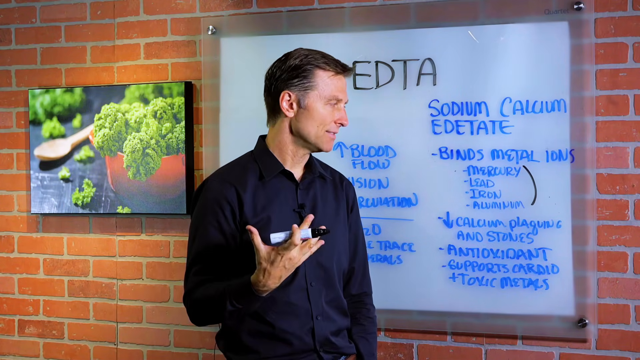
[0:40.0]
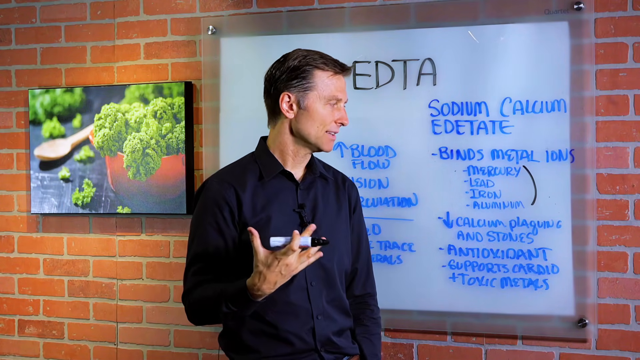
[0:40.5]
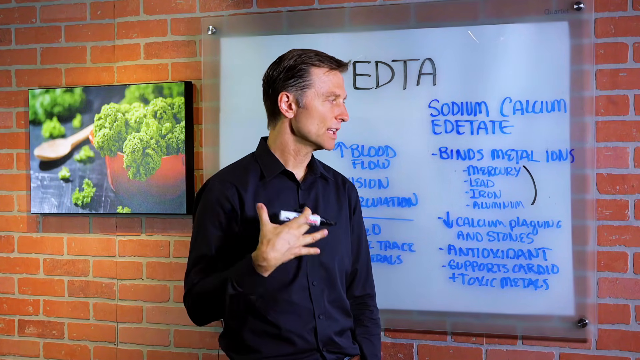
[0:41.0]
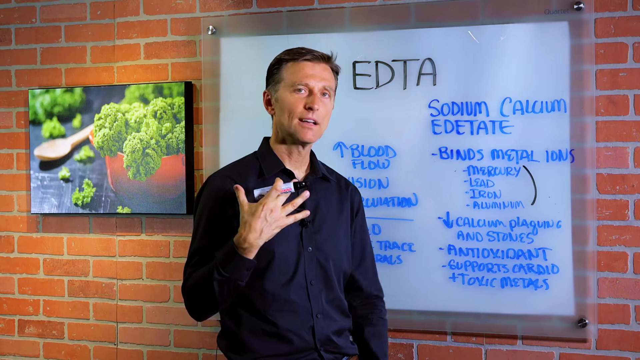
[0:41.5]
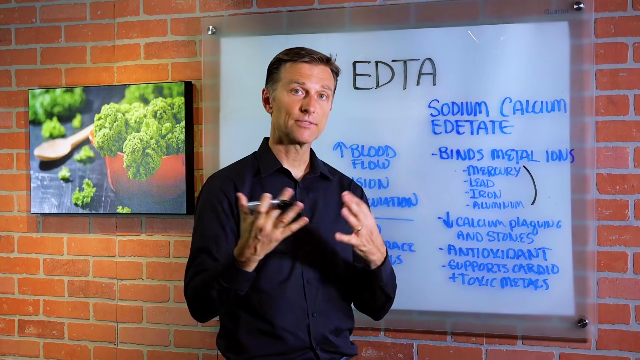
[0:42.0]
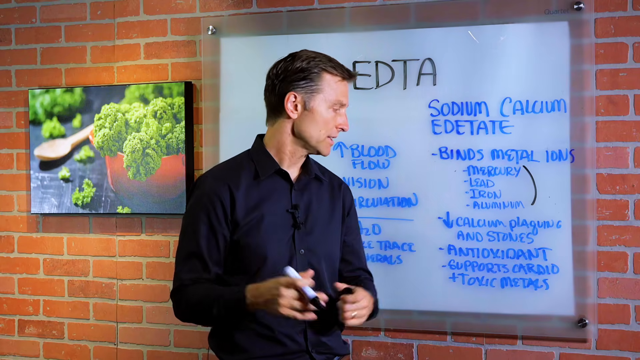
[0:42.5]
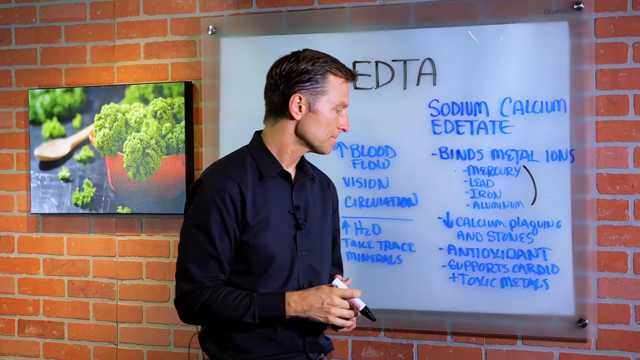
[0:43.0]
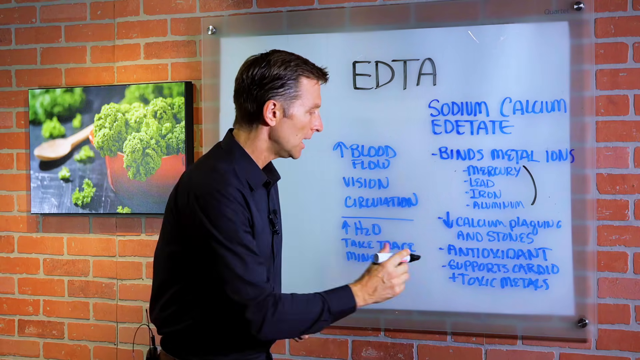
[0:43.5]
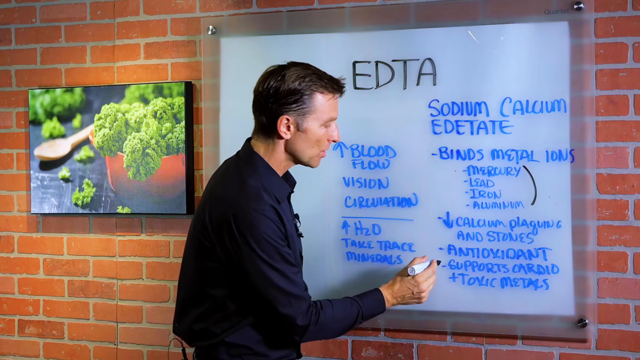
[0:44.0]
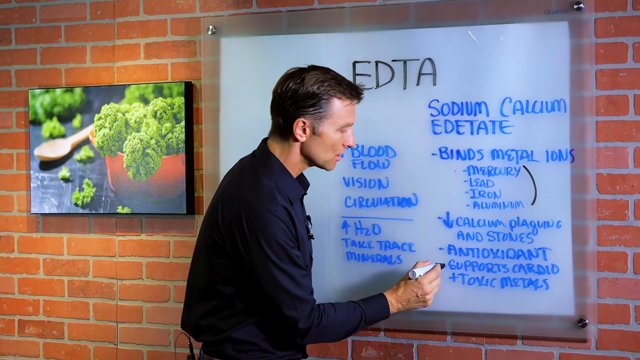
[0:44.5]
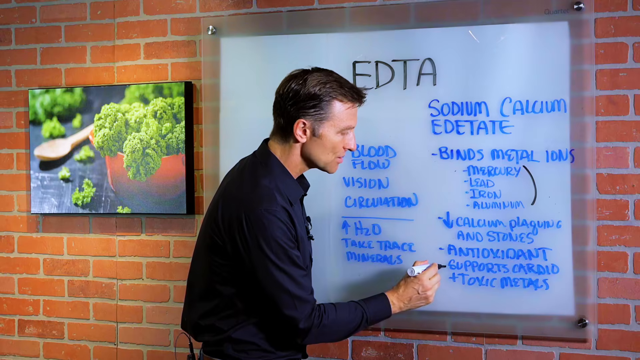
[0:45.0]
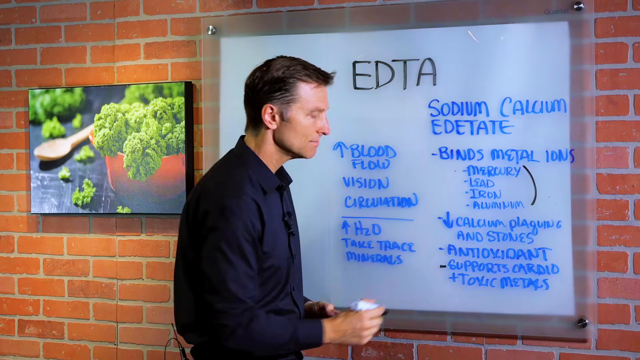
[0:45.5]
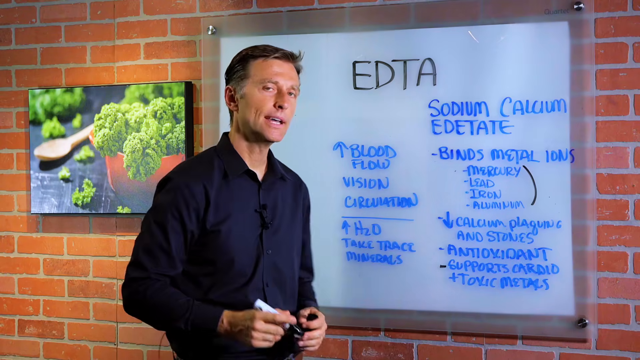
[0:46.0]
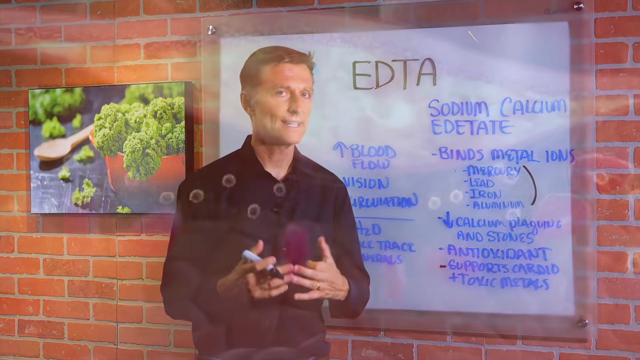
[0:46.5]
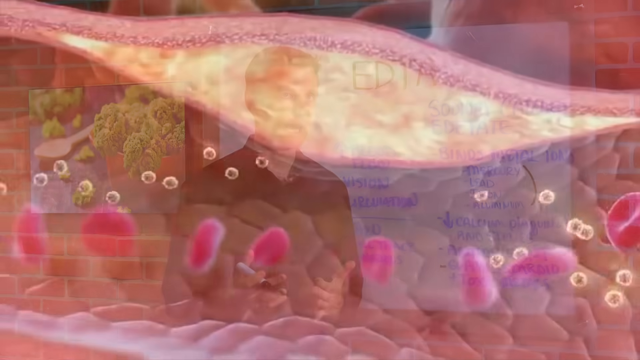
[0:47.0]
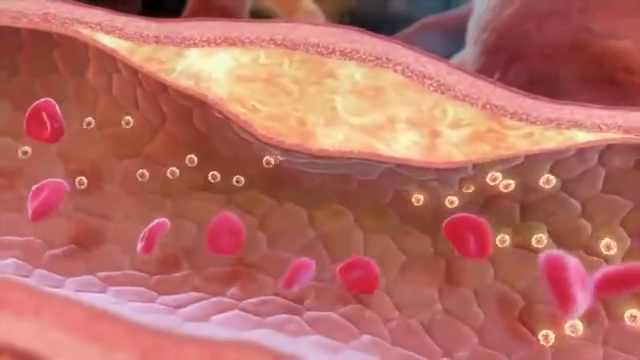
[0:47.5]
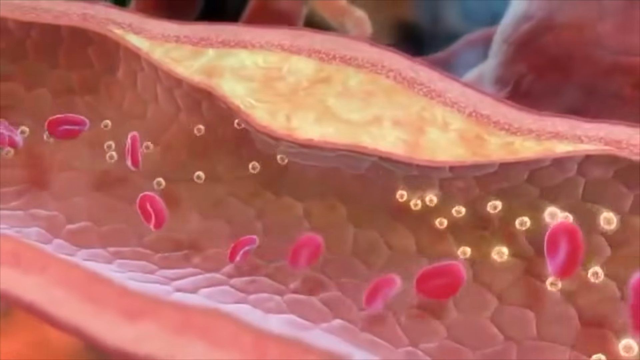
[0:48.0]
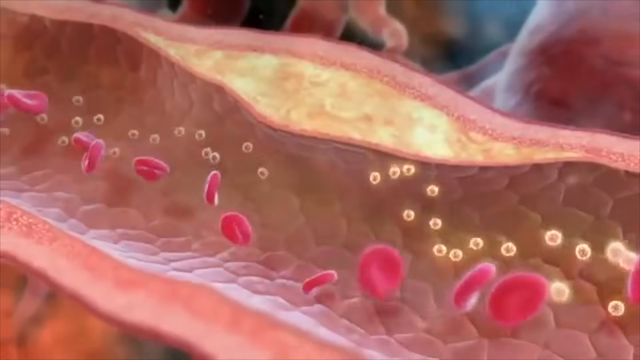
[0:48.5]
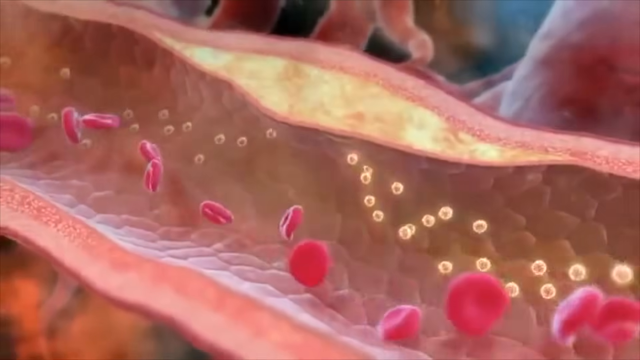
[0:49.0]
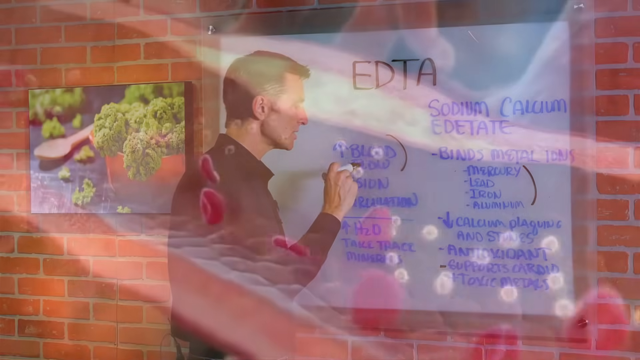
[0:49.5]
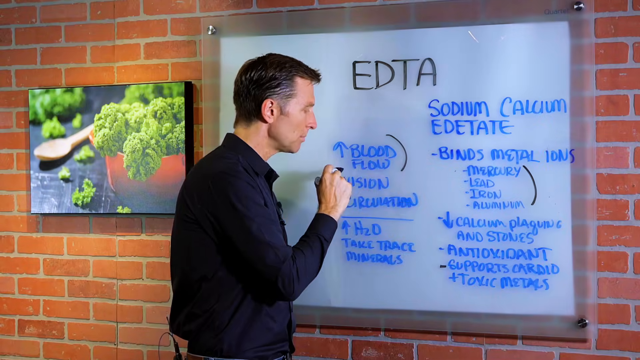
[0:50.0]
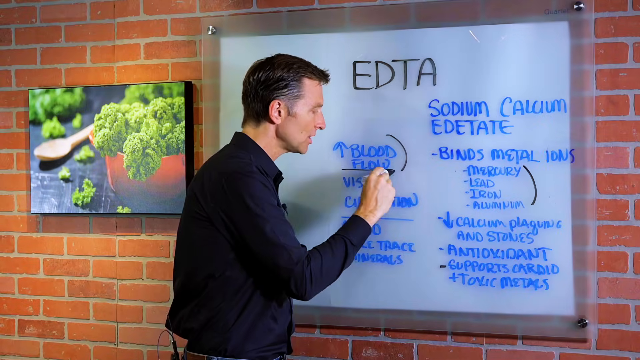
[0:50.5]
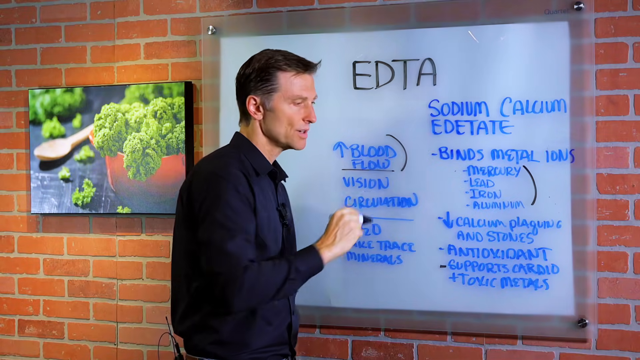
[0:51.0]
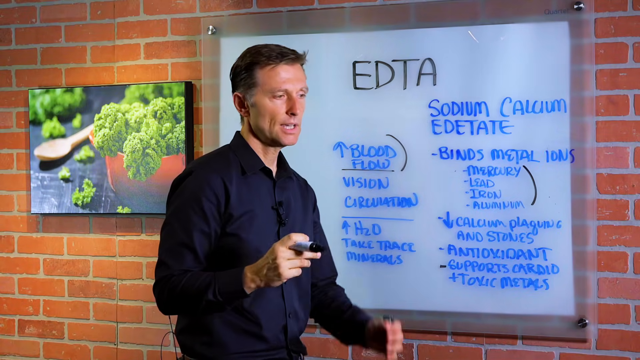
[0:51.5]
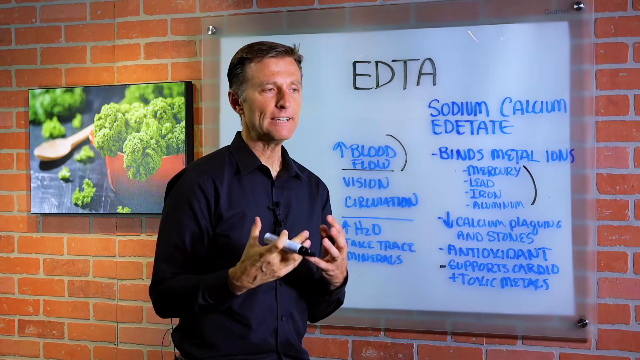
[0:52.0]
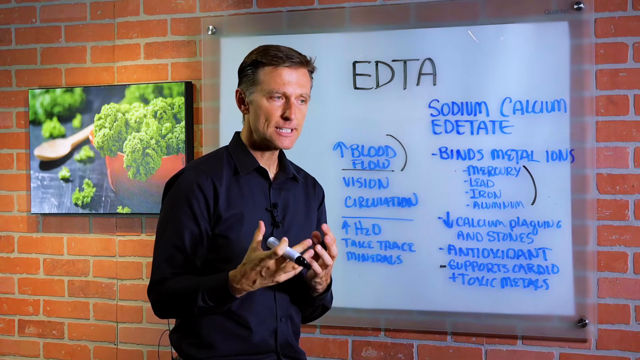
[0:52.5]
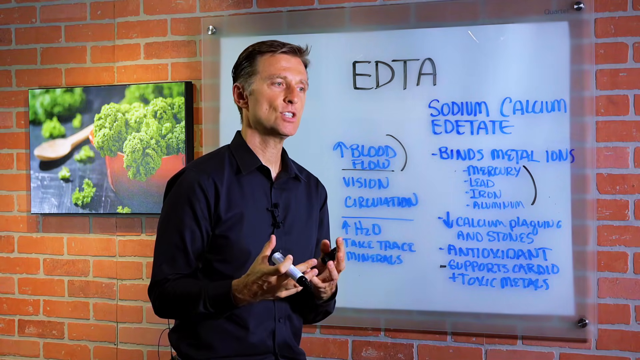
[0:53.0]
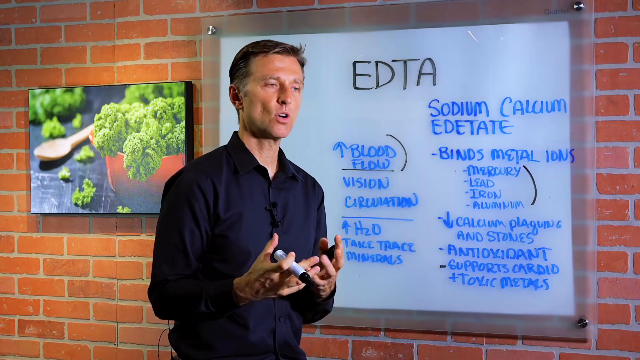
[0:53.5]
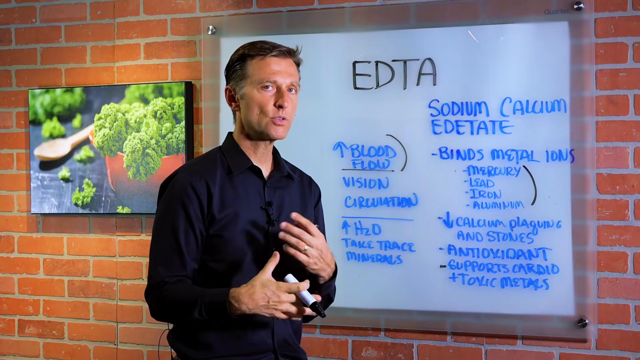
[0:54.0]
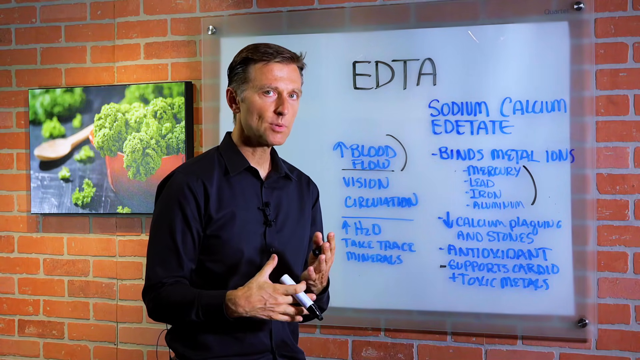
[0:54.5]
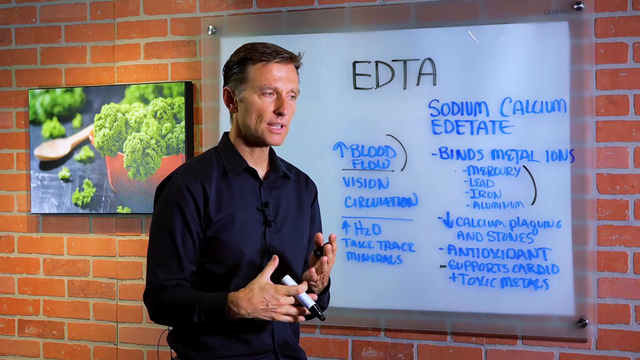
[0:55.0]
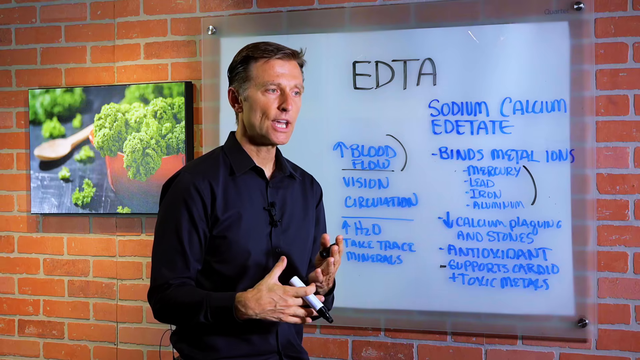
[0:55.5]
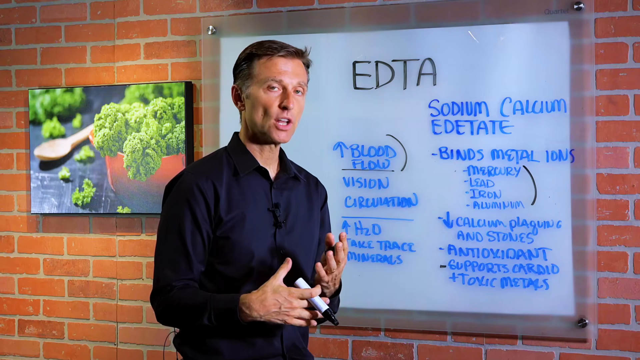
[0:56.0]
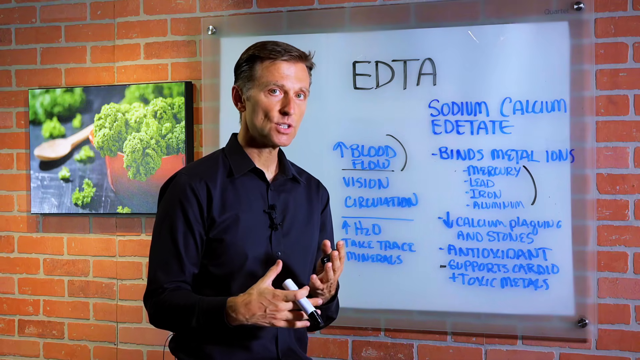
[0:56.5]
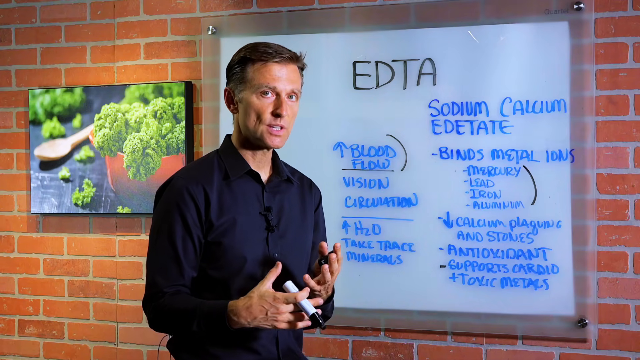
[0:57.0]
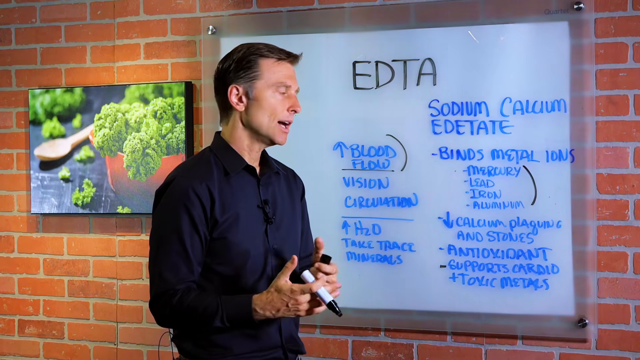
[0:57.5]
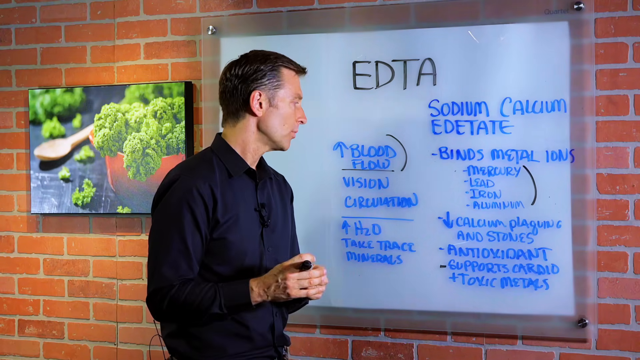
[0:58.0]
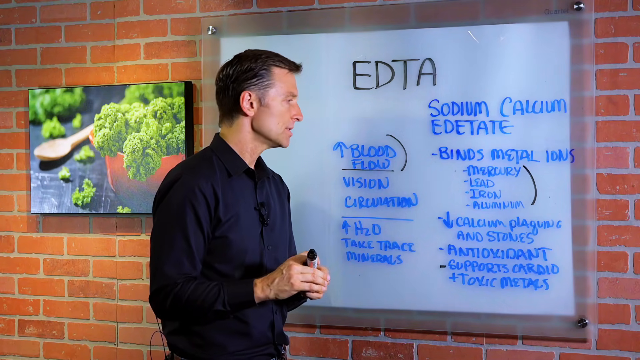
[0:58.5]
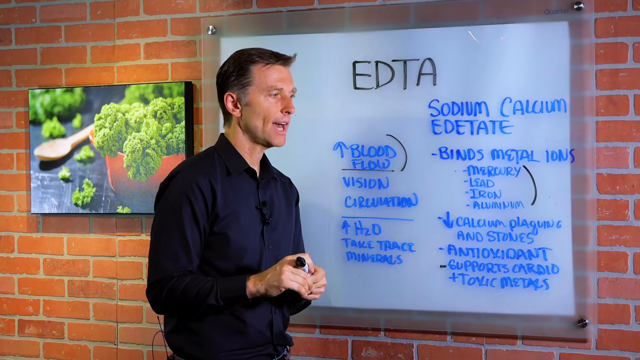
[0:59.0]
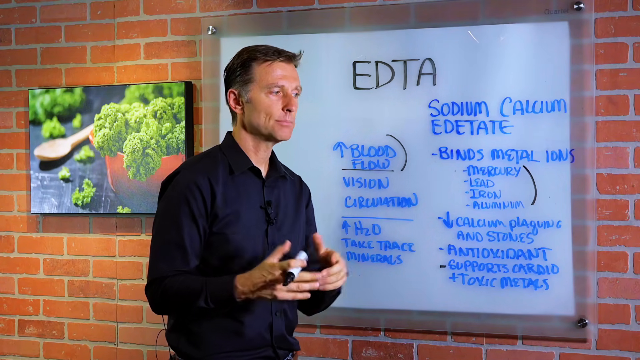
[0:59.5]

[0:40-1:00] The man stands in front of the whiteboard with a black marker in his right hand. He looks at the whiteboard, then turns around to face forward. Both his hands go up and he looks back toward the whiteboard. Using the marker in his right hand, he marks the words "supports cardio plus toxin metal" by putting a dash to the left of them. As he turns back around, the scene changes to the inside of someone's arteries, showing red blood cells and other cells leaking into the red blood cell. With the marker in his right hand, the man underlines the word "flow" on the whiteboard. He turns back and speaks into the camera, then looks back at the words in the middle of the board and moves the marker into his left hand, then back into his right.